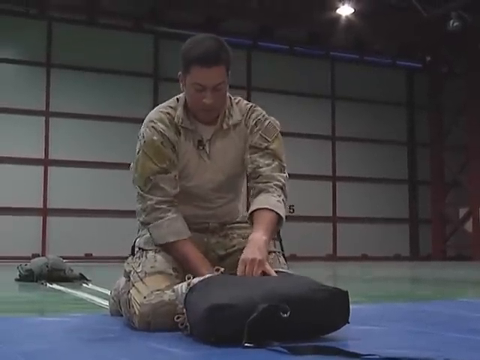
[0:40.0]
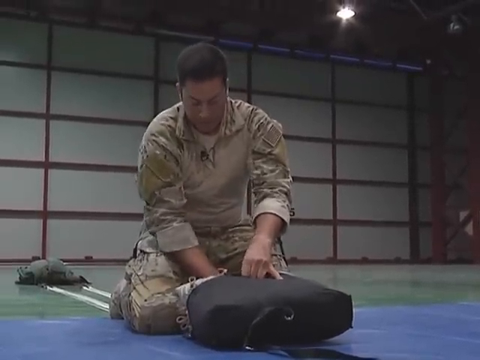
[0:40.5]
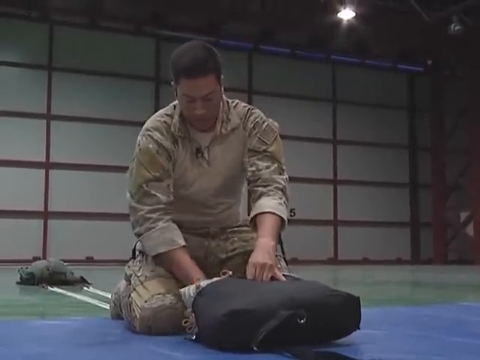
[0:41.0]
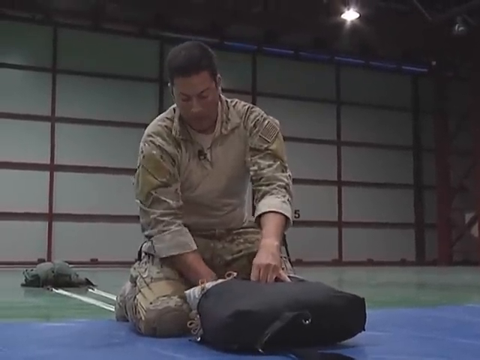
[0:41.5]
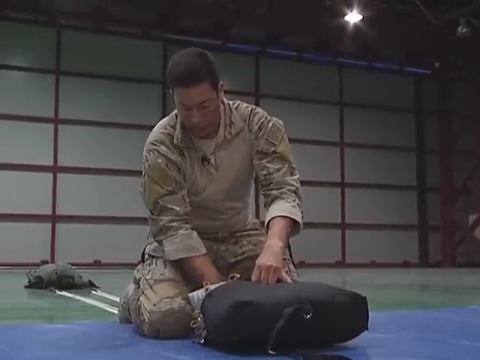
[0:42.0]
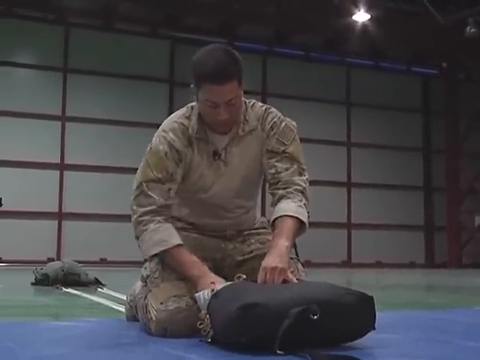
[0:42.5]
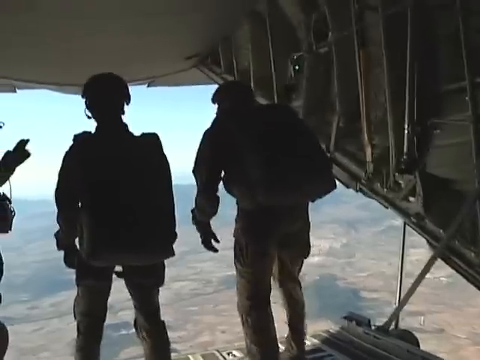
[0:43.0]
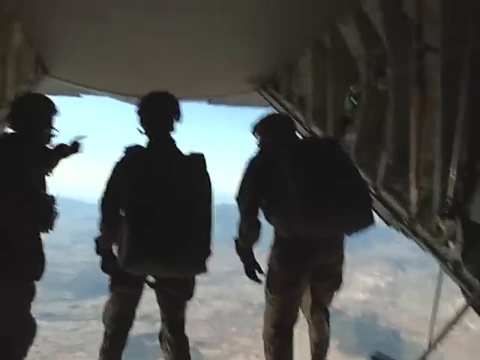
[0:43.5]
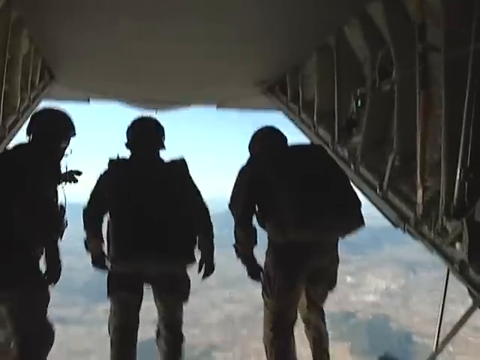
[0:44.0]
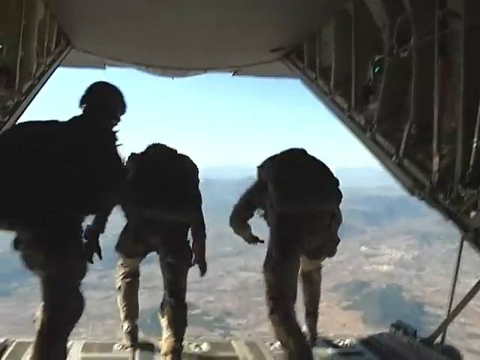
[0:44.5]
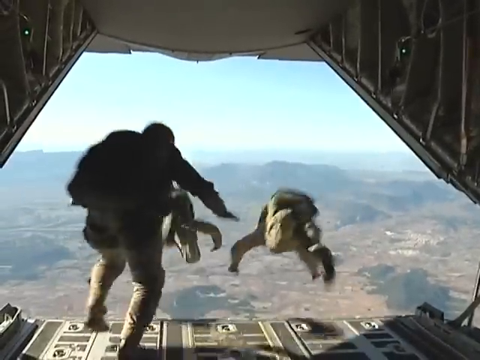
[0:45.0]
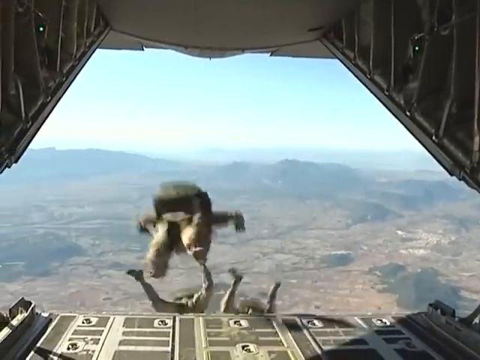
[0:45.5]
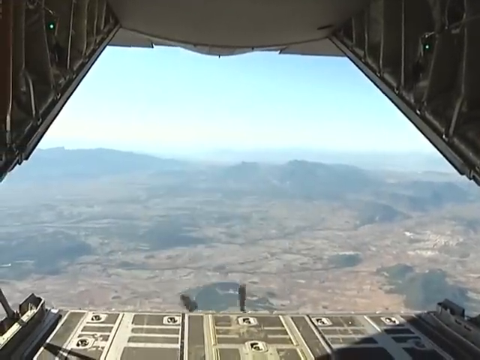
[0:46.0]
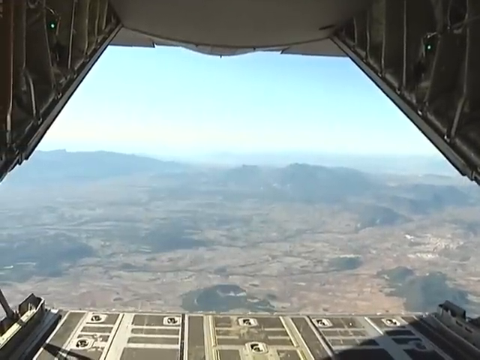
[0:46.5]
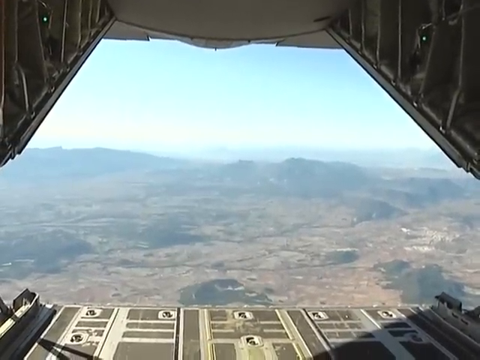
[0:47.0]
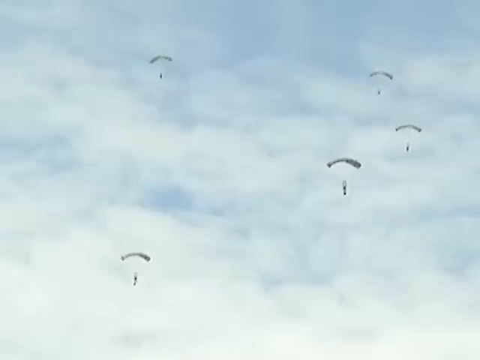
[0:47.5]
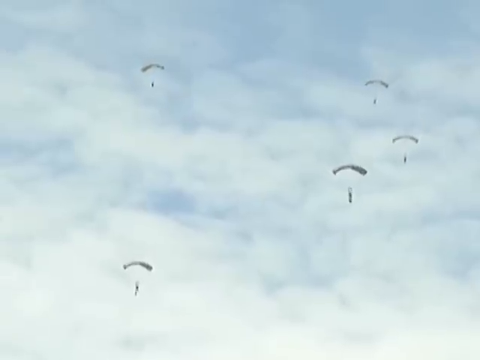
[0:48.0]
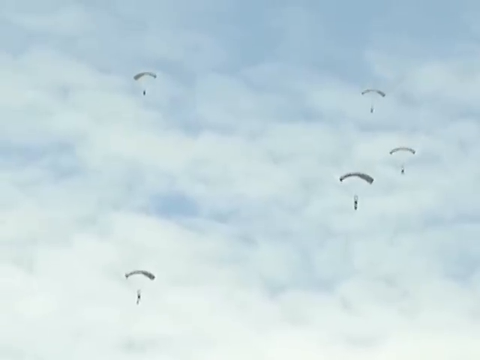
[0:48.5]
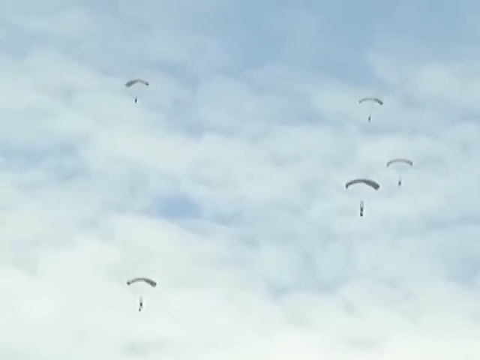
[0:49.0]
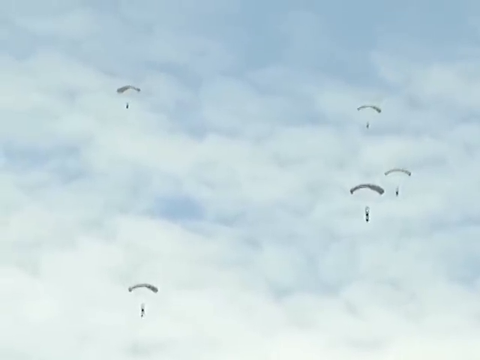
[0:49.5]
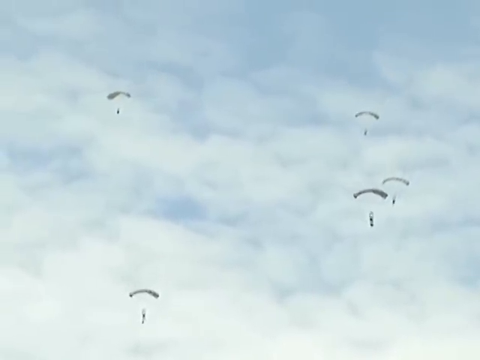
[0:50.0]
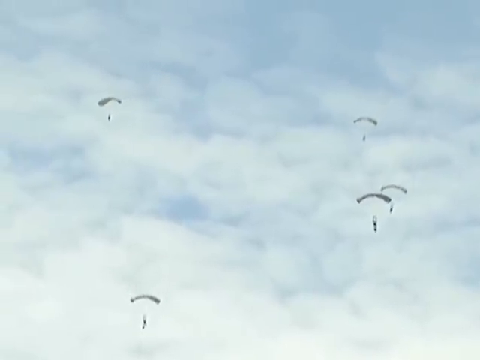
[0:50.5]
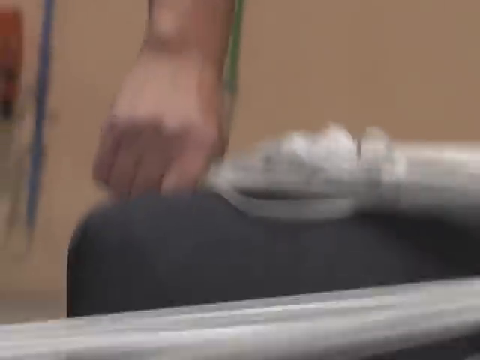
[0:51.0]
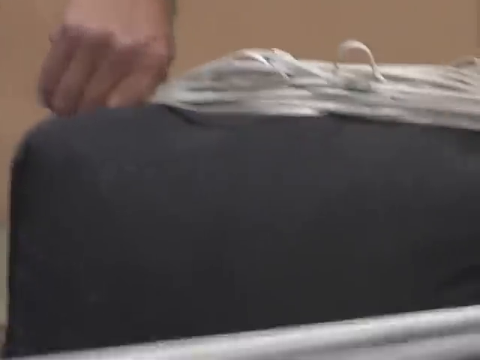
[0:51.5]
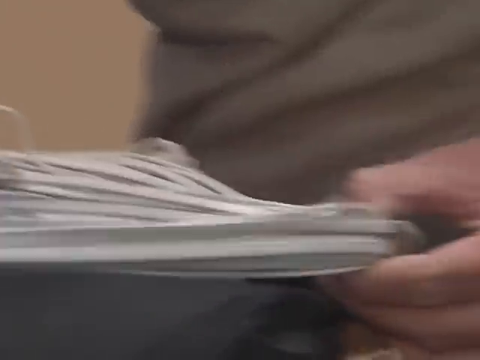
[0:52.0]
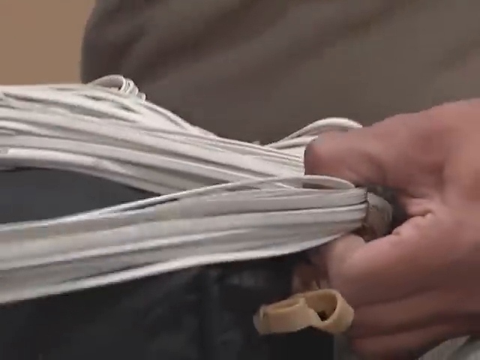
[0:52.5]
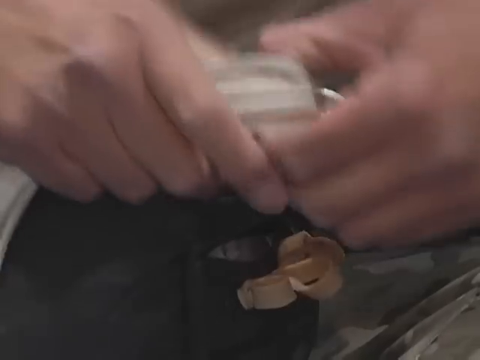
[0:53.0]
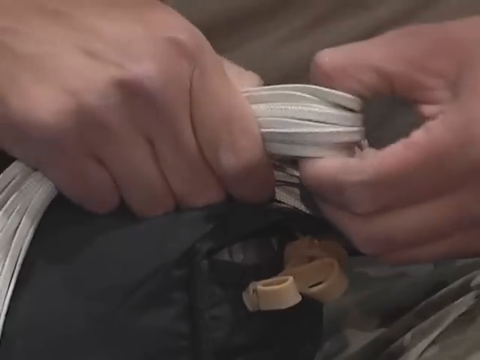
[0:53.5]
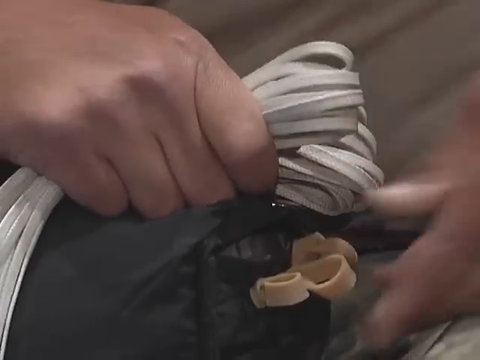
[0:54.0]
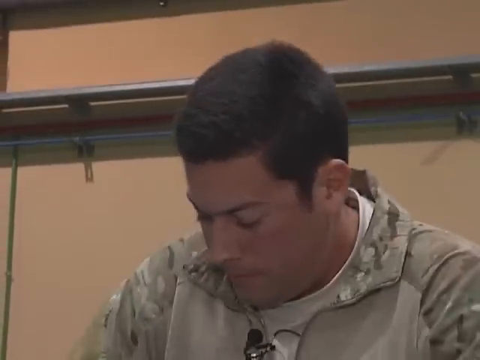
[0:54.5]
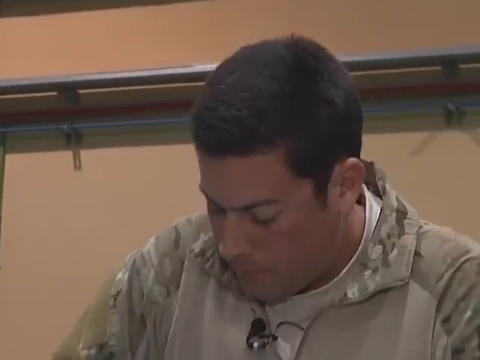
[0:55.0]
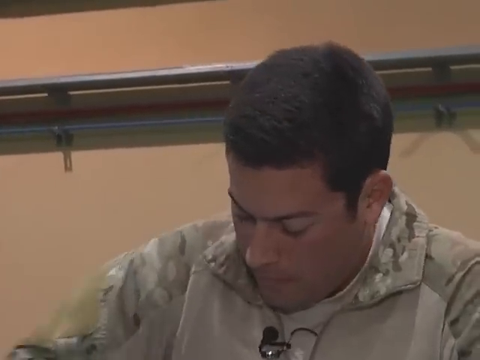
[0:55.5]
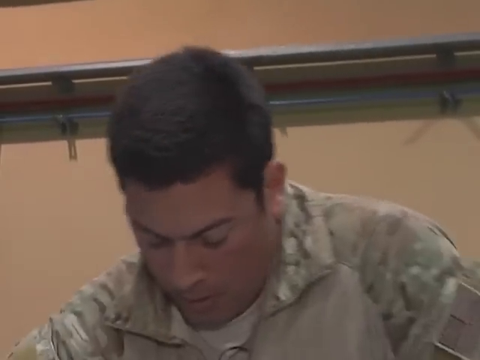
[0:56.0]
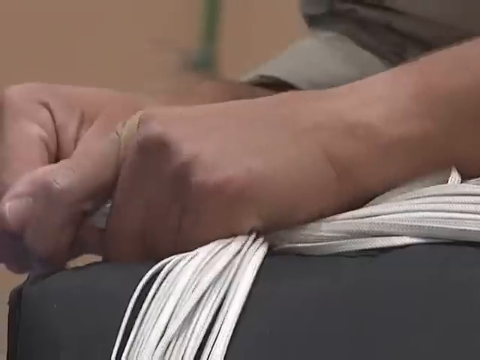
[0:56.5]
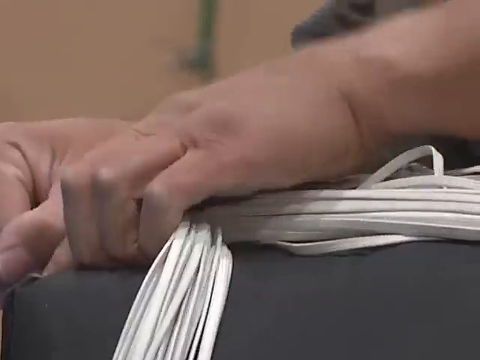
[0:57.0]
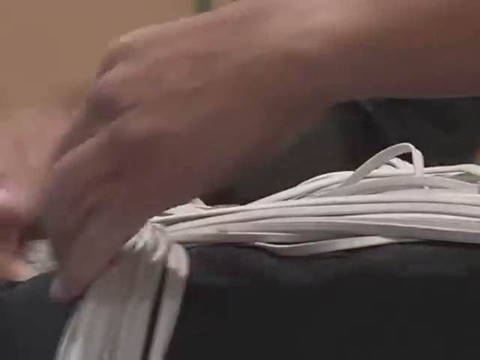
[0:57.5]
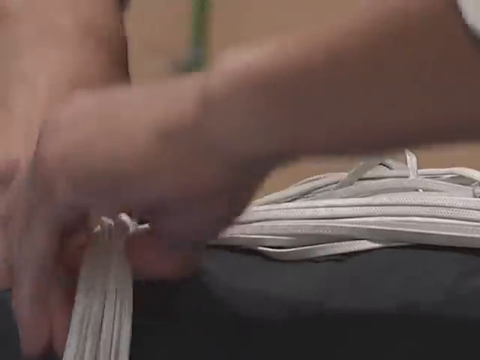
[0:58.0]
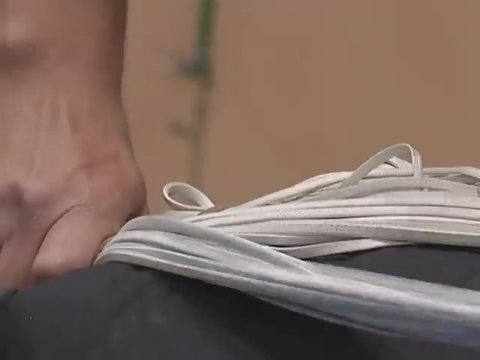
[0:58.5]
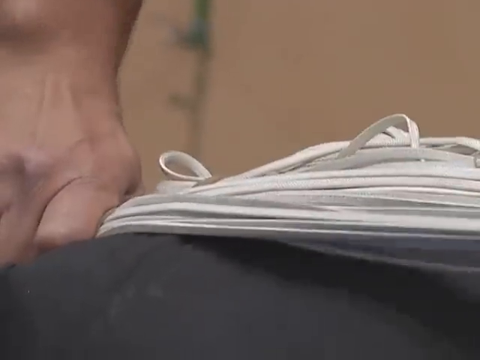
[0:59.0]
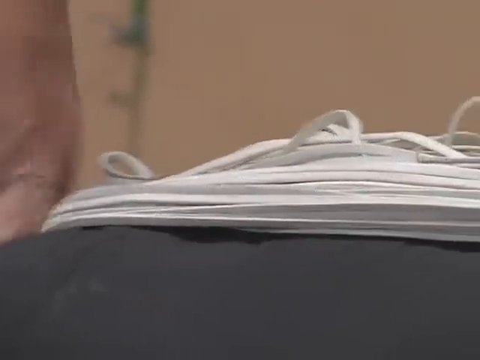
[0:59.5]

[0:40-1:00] Inside a large room that looks like an airplane hangar, a young soldier in beige army fatigues pushes a folded parachute into a black pack with his right hand while holding the top of the pack with his left. The scene switches to the inside of a transport plane with its back open, where three men, each wearing a parachute on his back, stand looking out over the open space. Two jump out together and a third follows them. Five people in parachutes then descend through the sky. A close-up shows the man's hands holding a group of white strings or ties; he looks as though he is trying to tie them into a knot or a ball of some kind. The camera briefly switches to a close-up of his face as he looks down intently at what he is doing, then returns to his hands: he holds the groups of white ties down on one end with his right hand and stretches them around with his left.